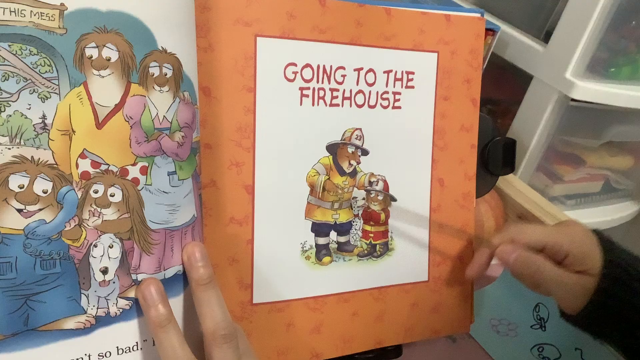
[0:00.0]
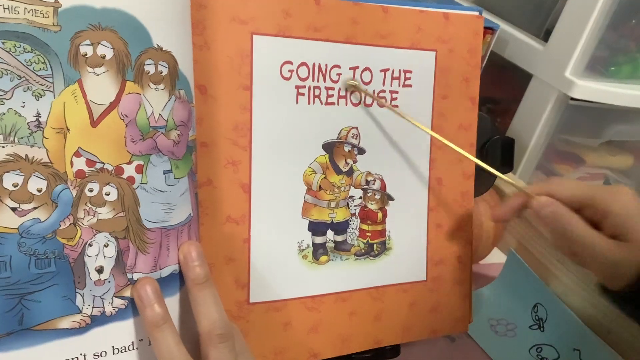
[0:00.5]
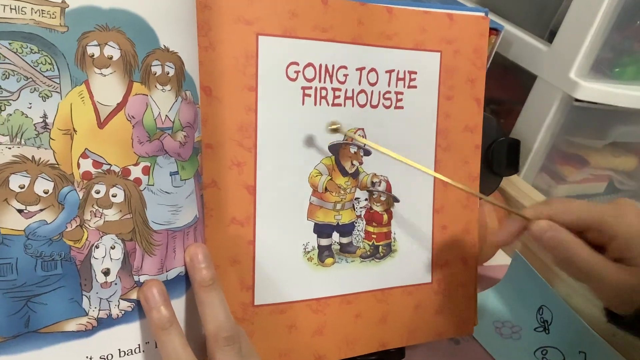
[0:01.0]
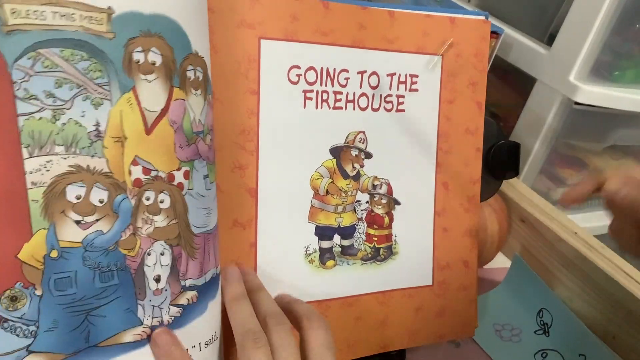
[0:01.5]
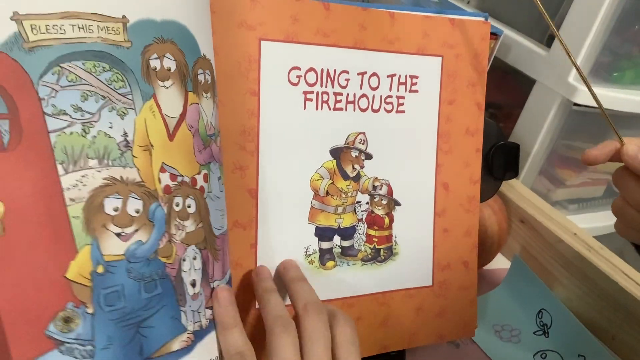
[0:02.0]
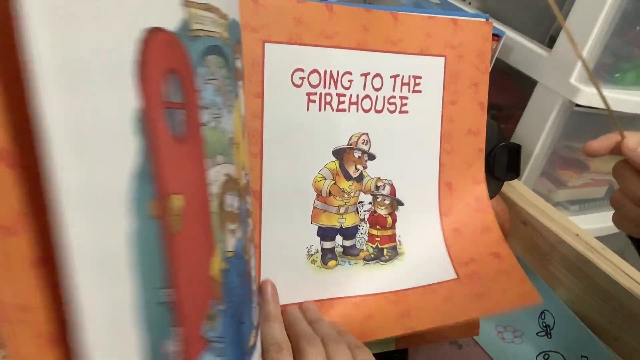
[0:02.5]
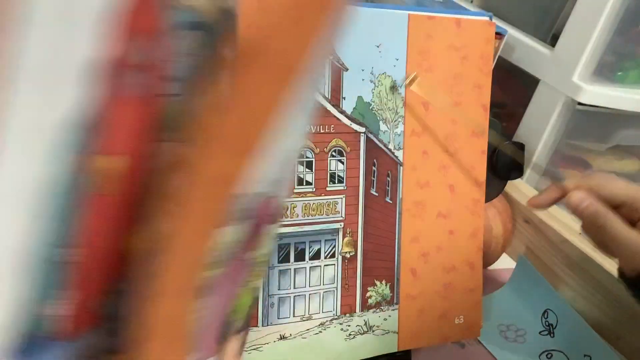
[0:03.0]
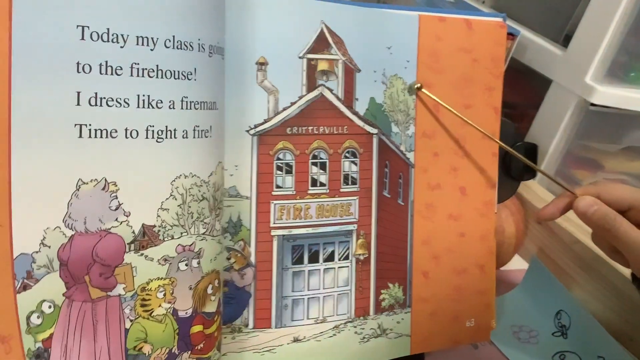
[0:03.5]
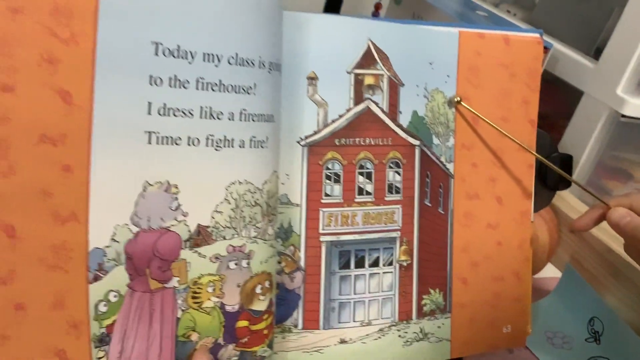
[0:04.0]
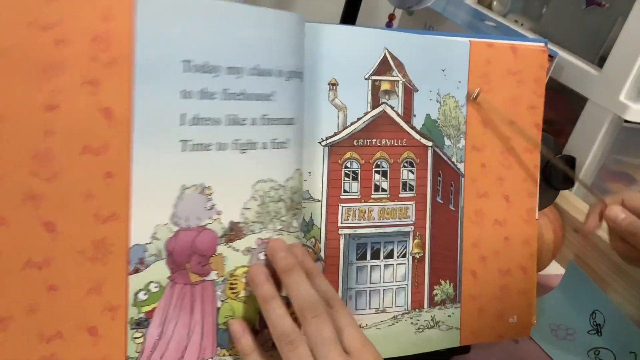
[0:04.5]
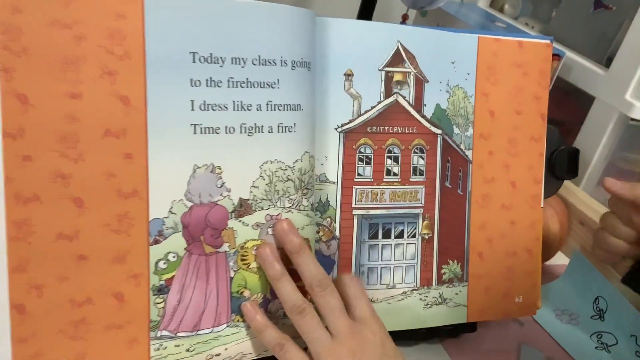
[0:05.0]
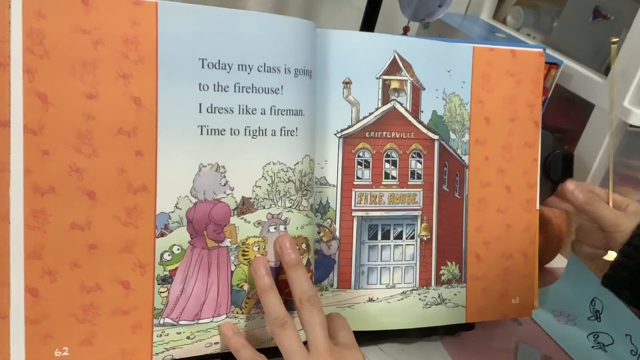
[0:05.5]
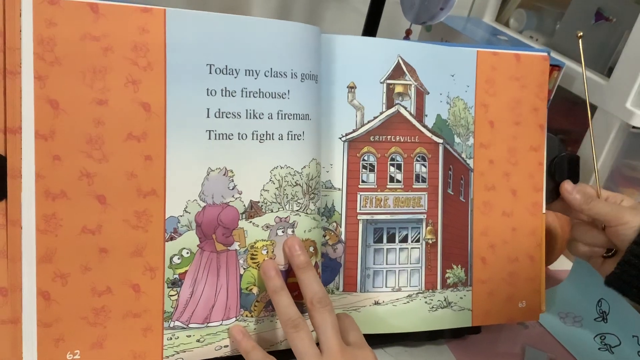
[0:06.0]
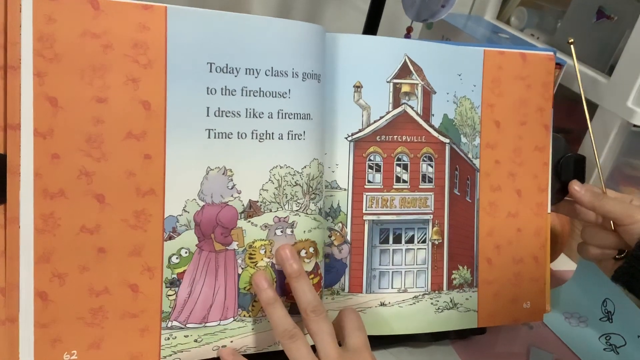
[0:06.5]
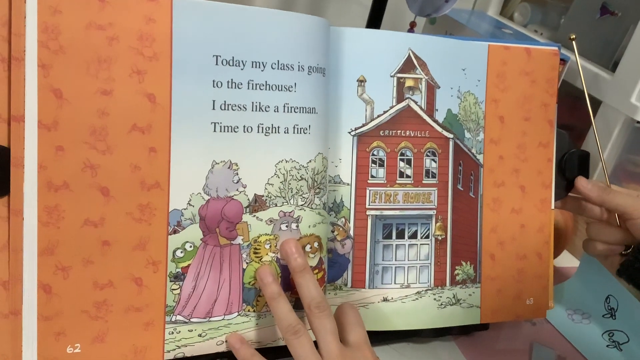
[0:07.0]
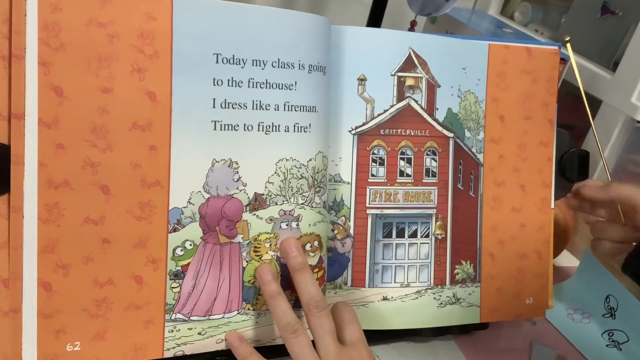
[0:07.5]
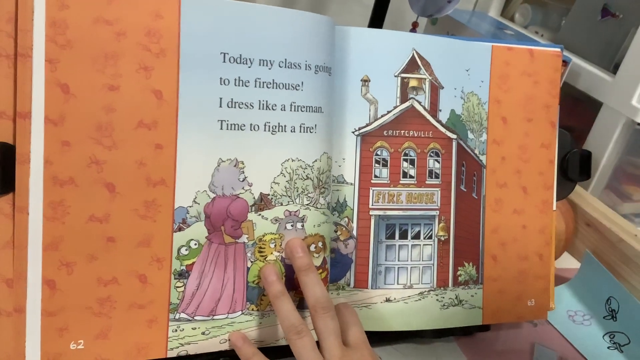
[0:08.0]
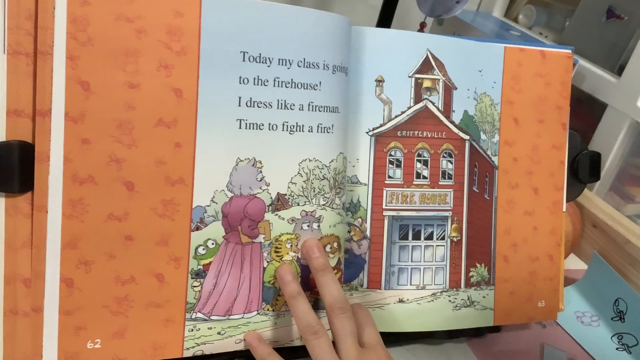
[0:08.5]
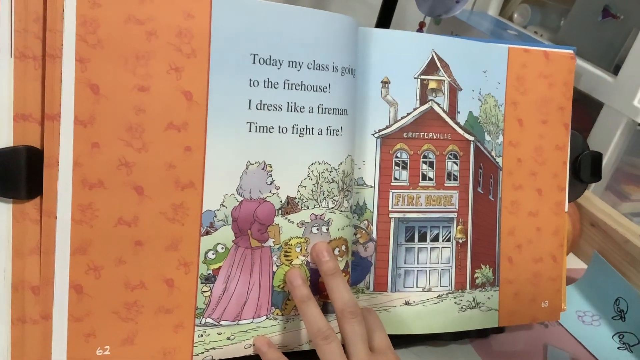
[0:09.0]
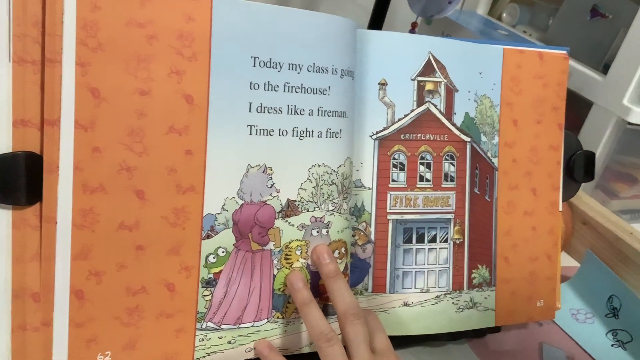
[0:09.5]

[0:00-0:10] The main subjects are animals: one is dressed as a fireman, one as a schoolteacher, and there are child animals dressed like normal people. It looks like a school trip to a firefighters' headquarters. There are four or five children and two adults, one being the teacher and one being the fireman. Red text reads "going to the firehouse", and further text says "today my class is going to the firehouse, I dress like a fireman. Time to fight a fire." Nothing changes on this page; they just go to the firehouse. The characters look like dogs.